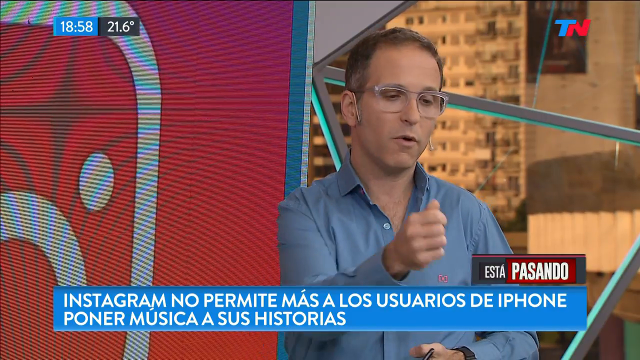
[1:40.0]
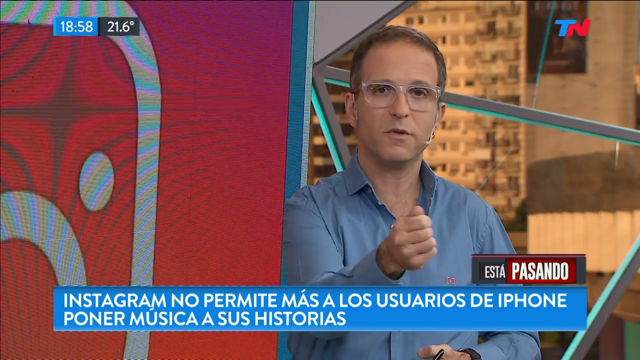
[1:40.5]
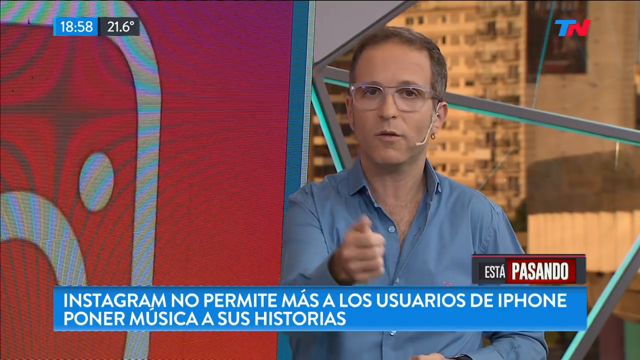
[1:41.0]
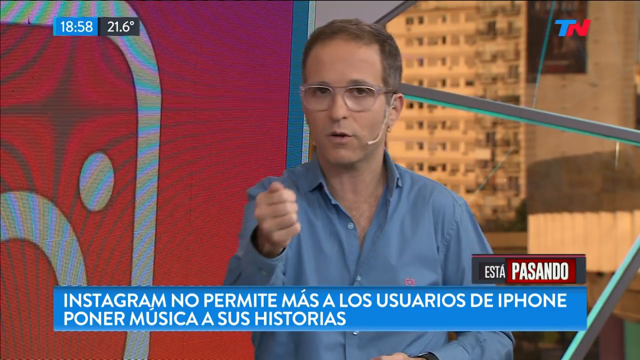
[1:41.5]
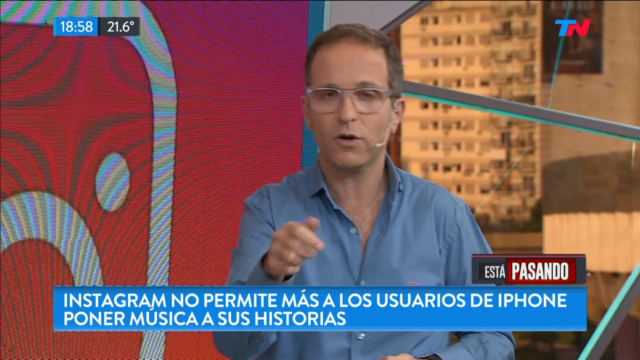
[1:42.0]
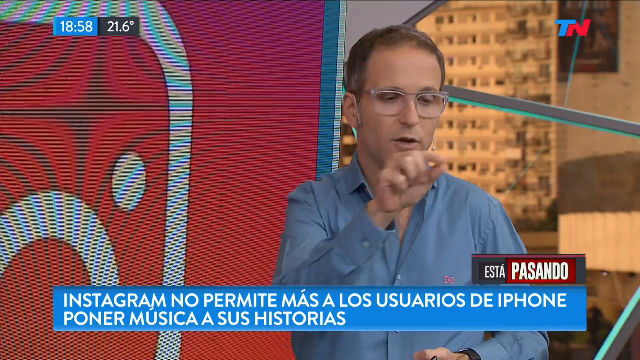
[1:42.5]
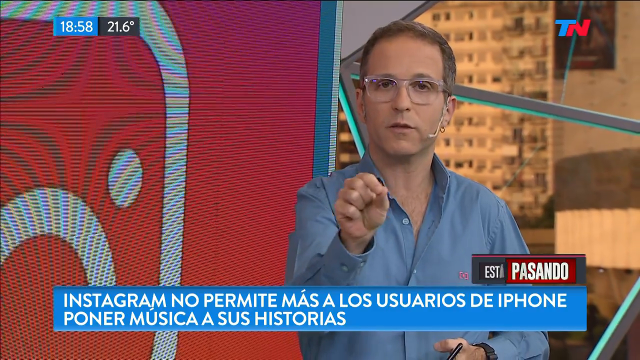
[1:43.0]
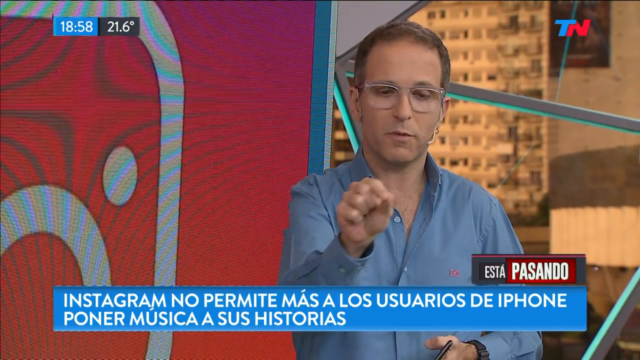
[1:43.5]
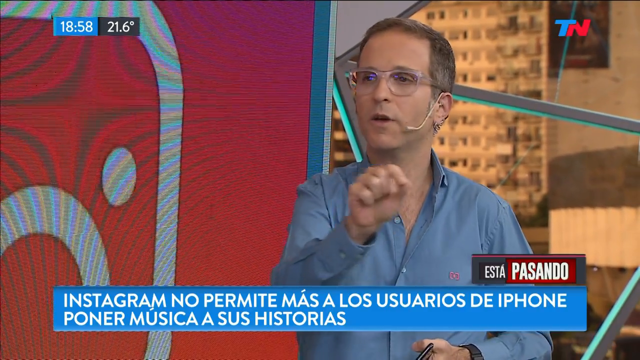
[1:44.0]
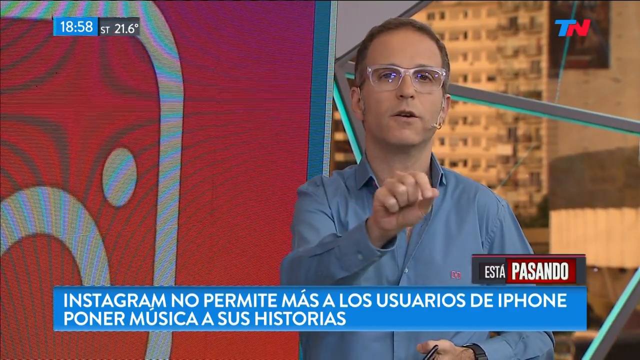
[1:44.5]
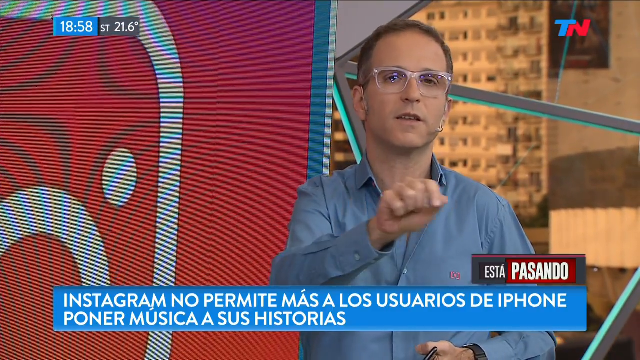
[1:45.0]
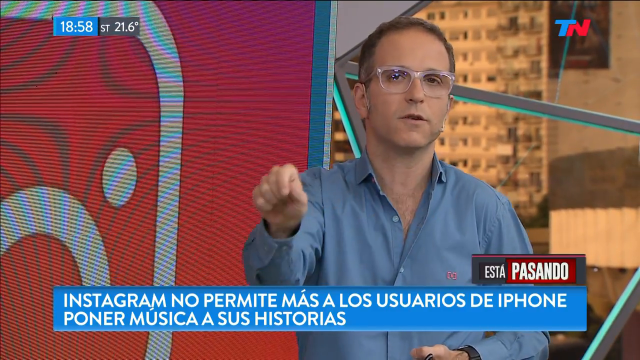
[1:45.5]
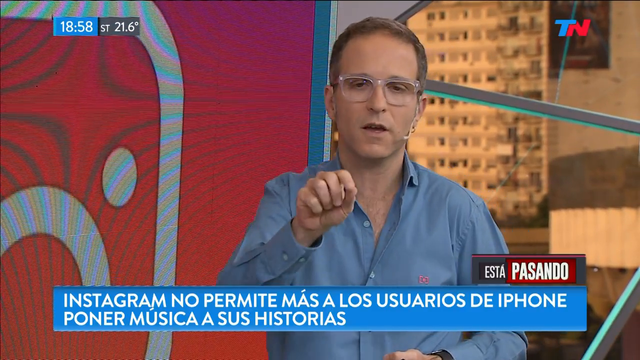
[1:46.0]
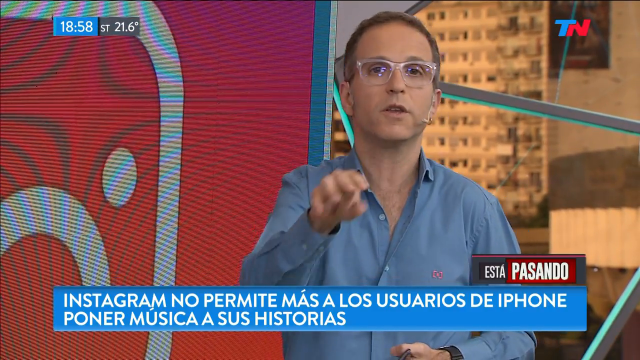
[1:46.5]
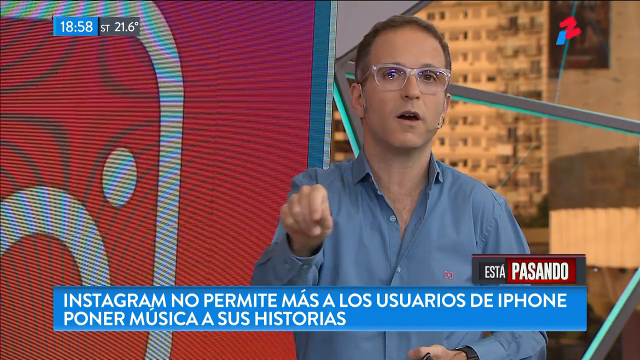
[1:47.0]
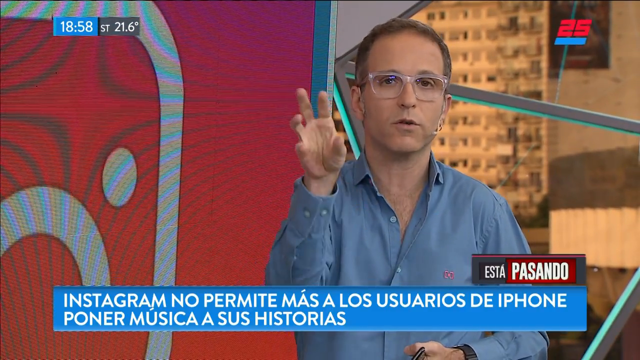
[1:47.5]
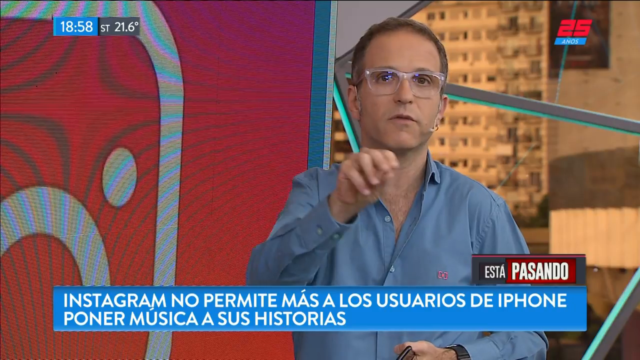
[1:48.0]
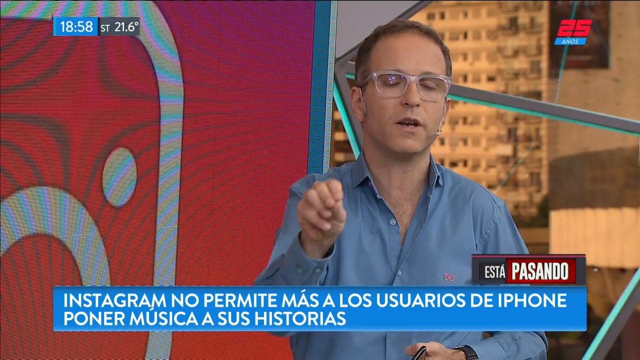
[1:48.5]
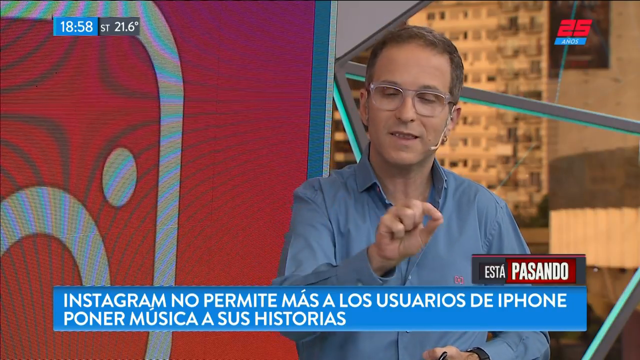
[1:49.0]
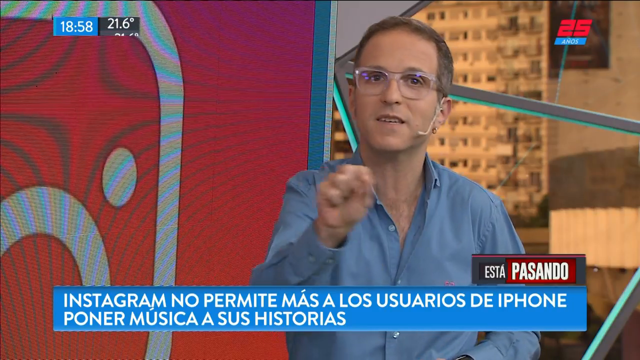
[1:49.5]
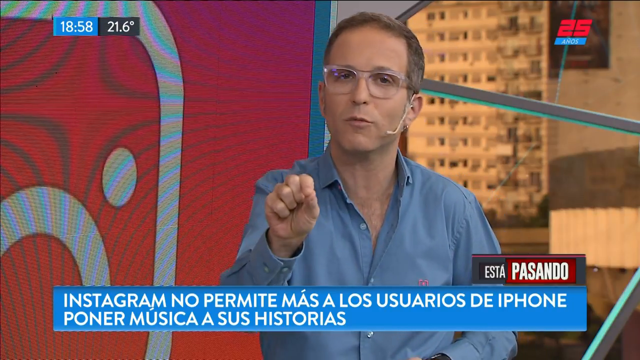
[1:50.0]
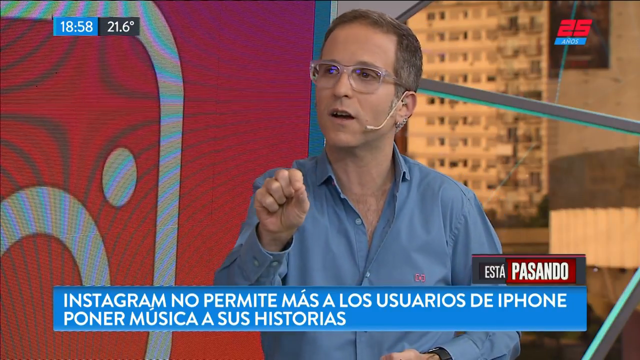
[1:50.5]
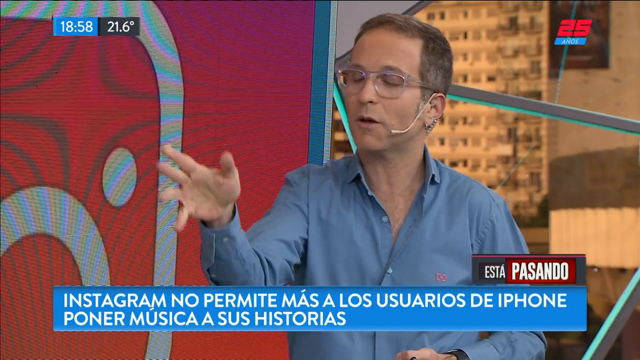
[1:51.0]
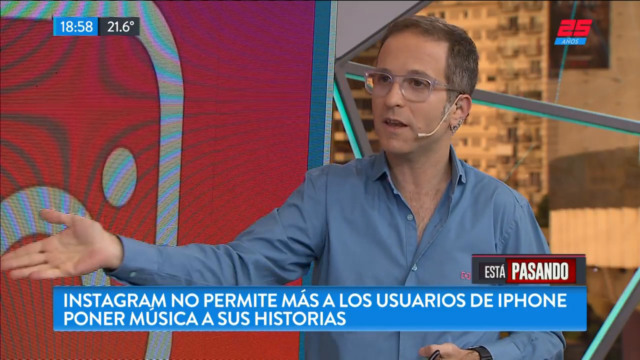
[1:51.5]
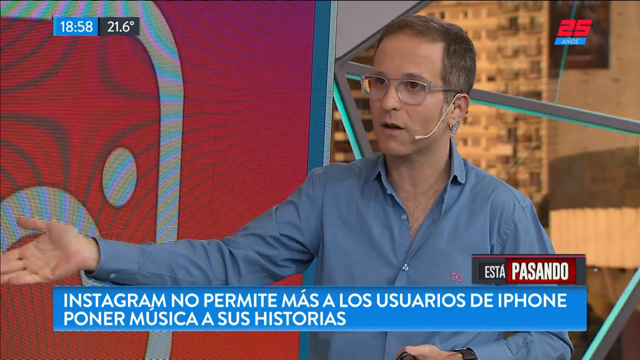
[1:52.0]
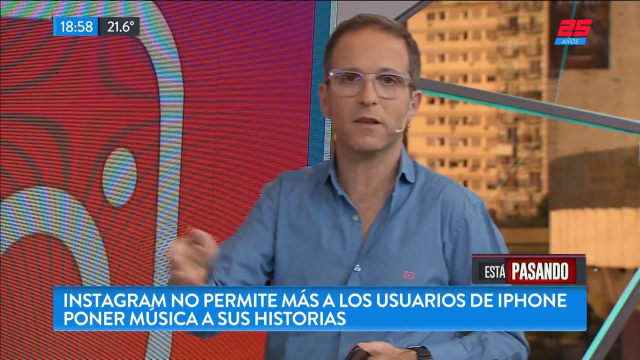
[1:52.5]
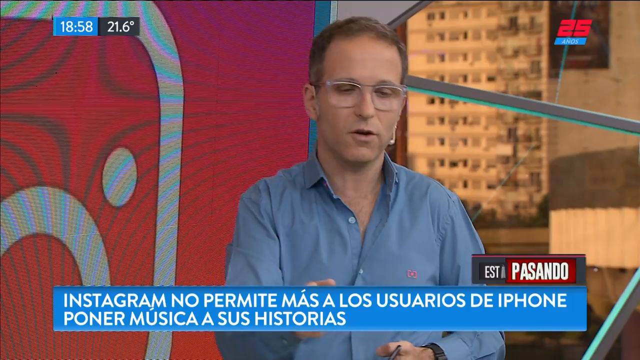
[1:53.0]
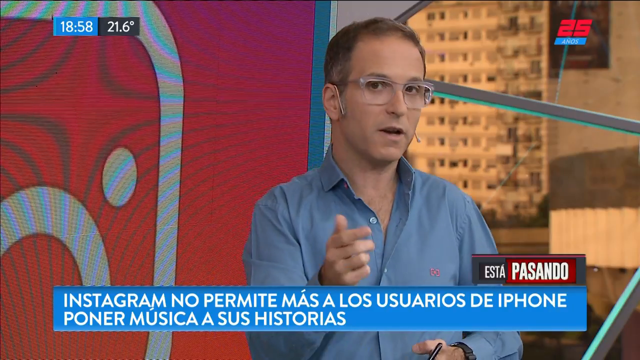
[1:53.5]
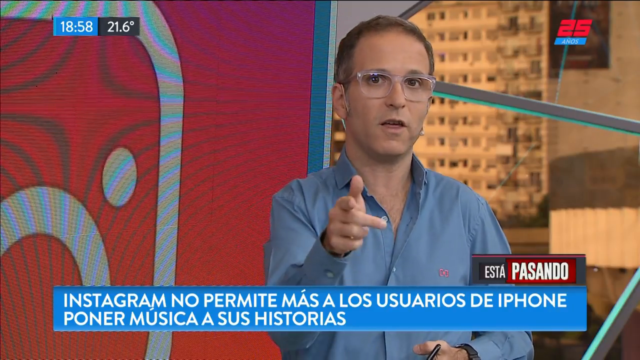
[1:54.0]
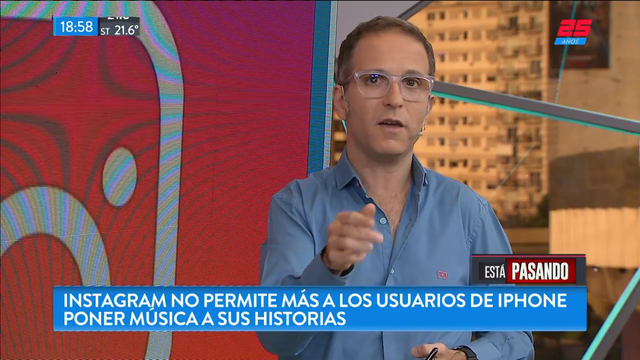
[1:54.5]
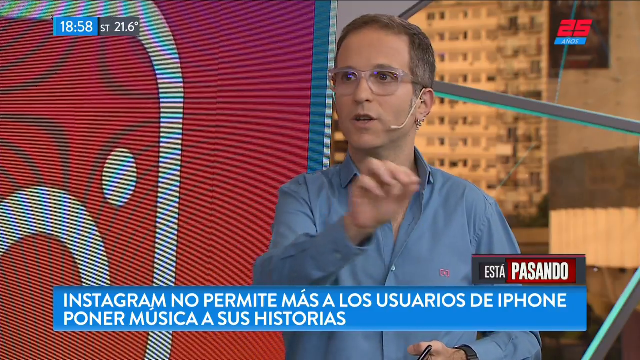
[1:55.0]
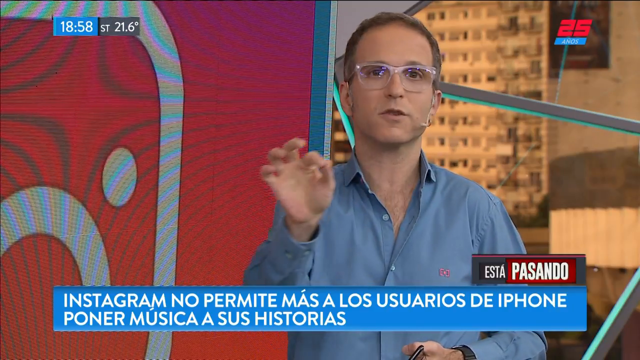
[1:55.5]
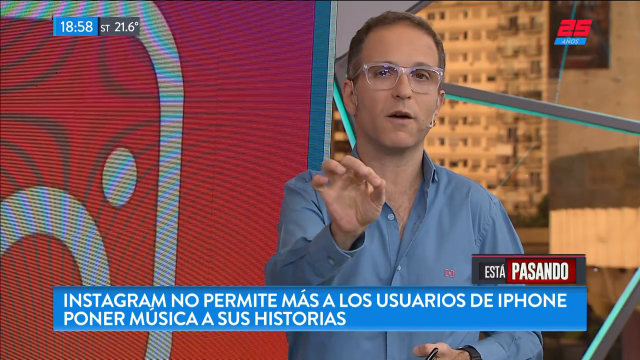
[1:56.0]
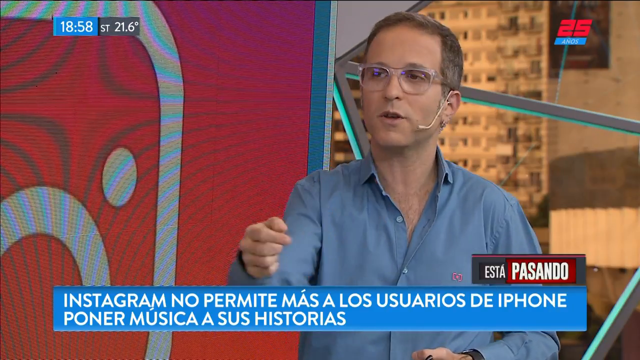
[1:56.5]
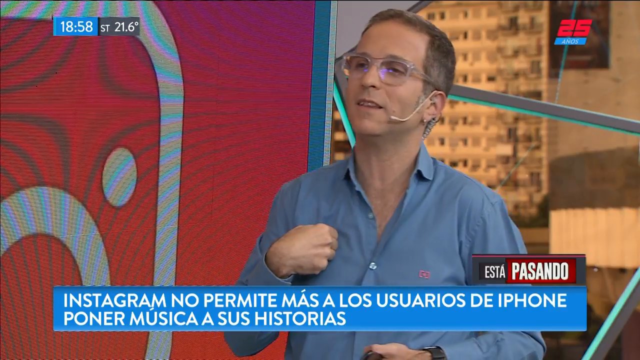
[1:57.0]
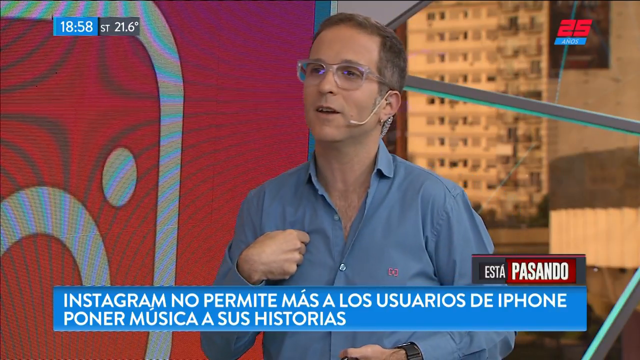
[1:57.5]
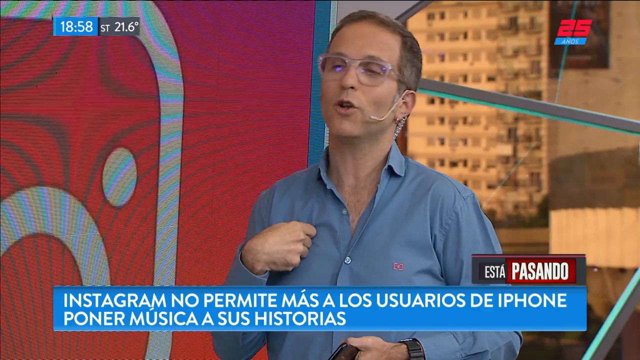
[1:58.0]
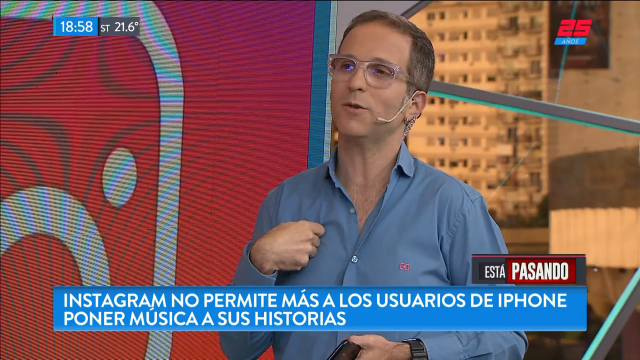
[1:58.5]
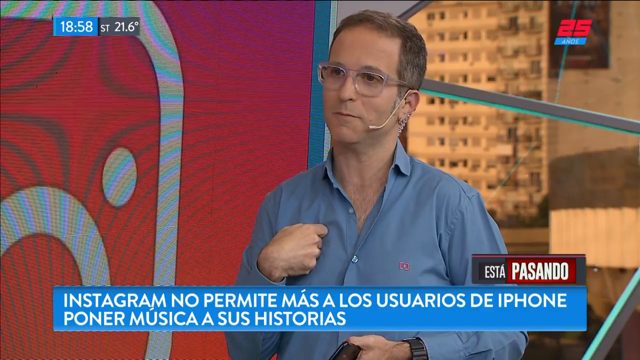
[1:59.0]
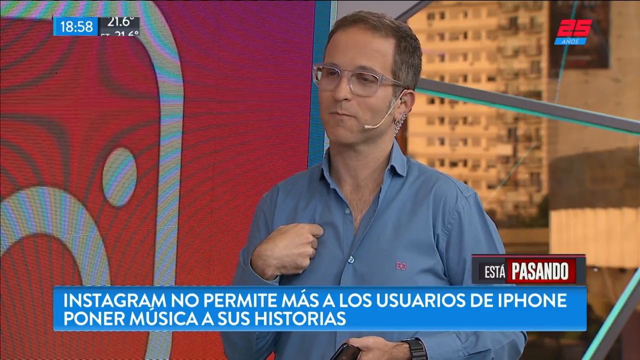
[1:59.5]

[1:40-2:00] The man continues talking about the Instagram story. He seems pretty composed and does not seem too worked up.